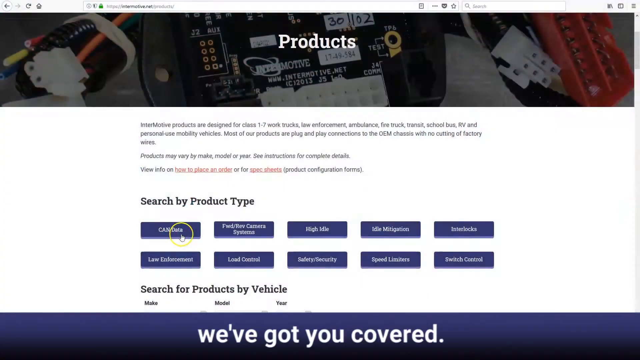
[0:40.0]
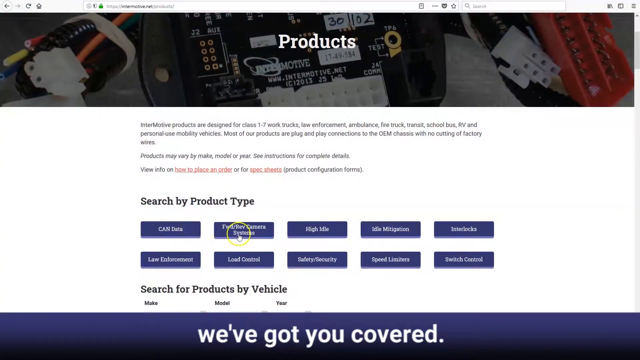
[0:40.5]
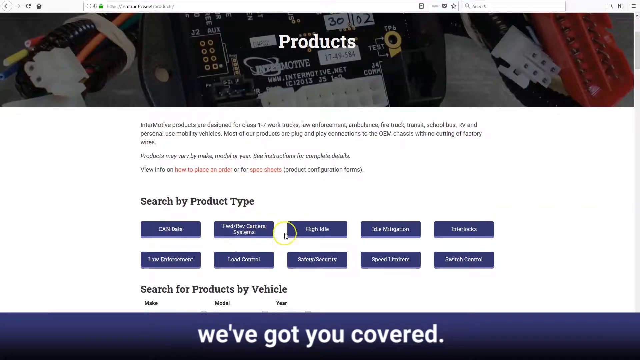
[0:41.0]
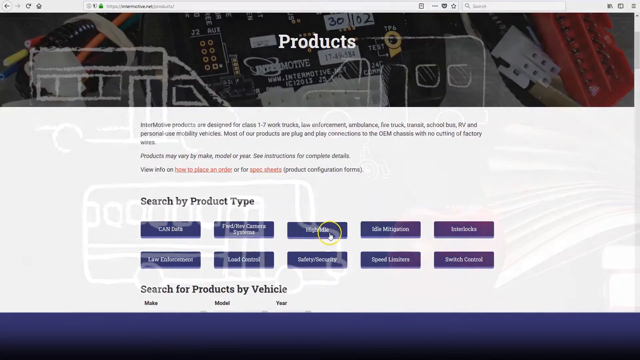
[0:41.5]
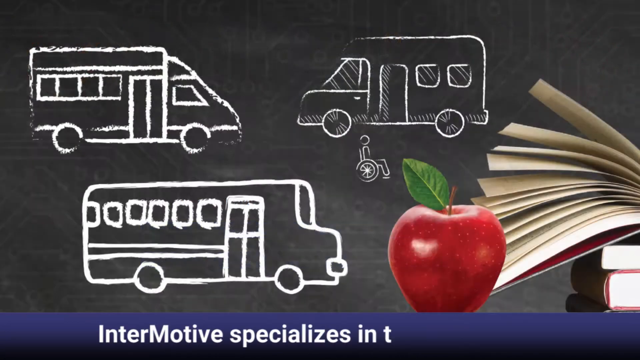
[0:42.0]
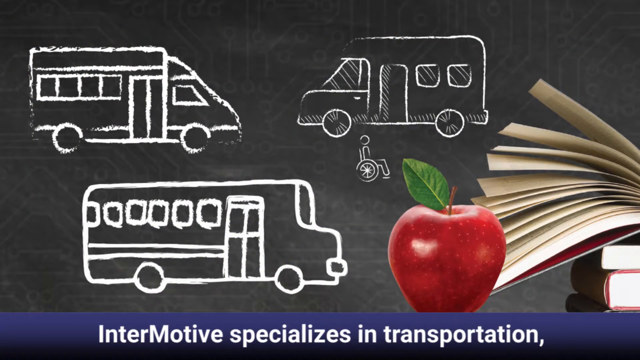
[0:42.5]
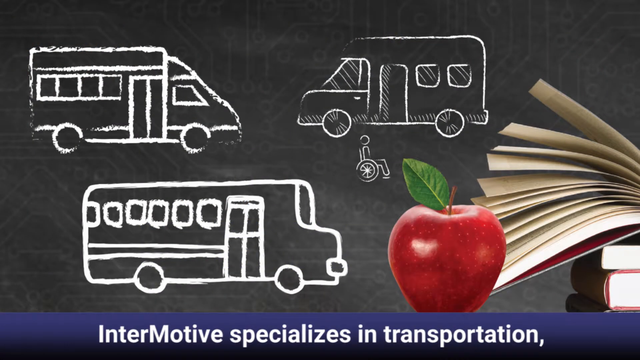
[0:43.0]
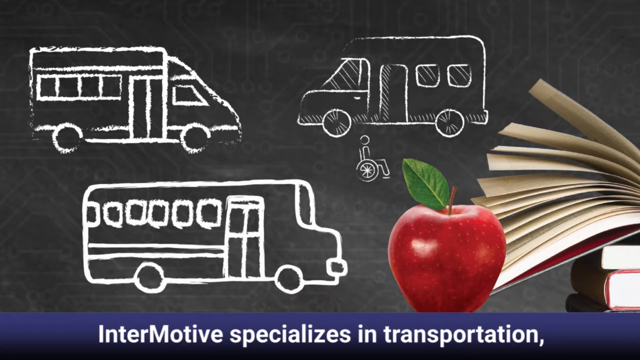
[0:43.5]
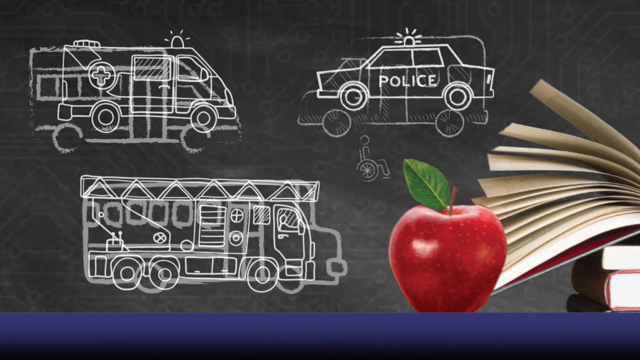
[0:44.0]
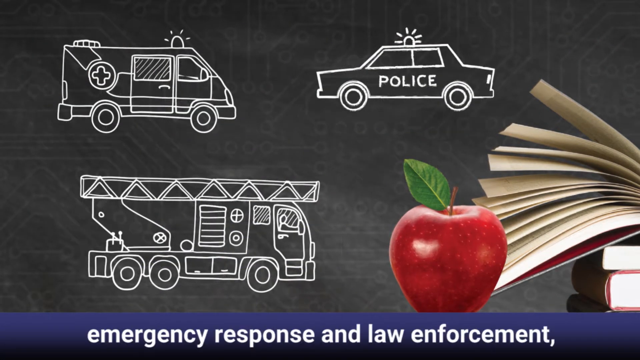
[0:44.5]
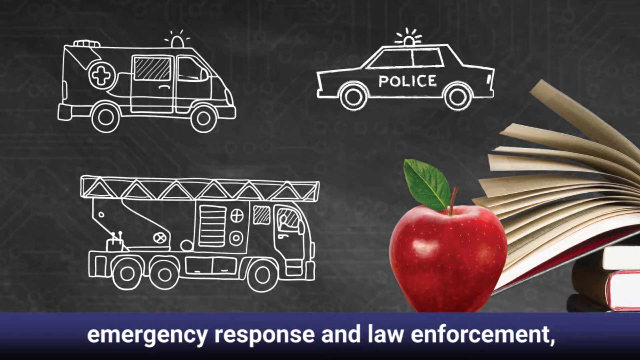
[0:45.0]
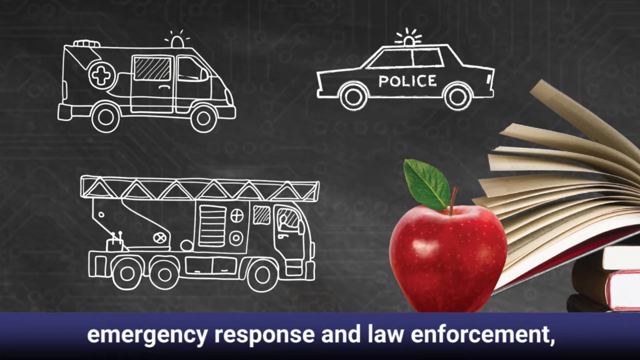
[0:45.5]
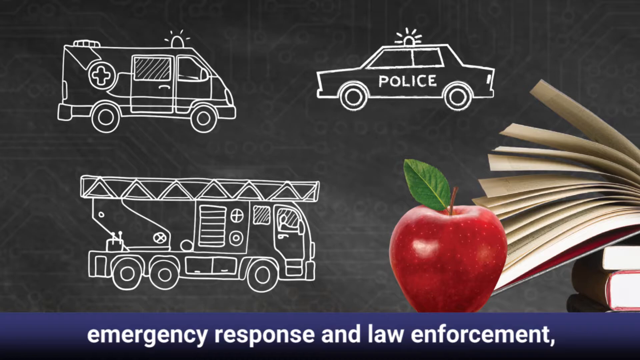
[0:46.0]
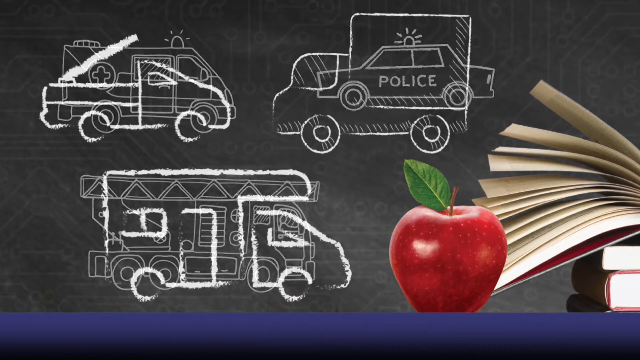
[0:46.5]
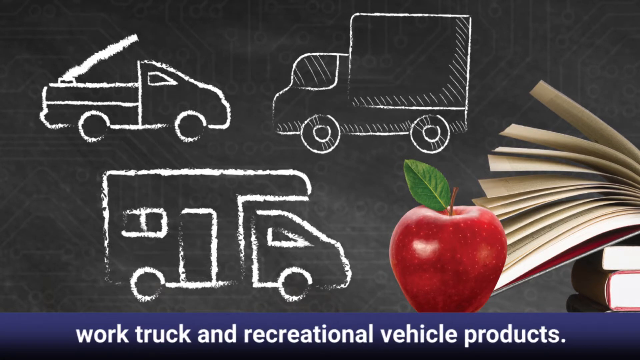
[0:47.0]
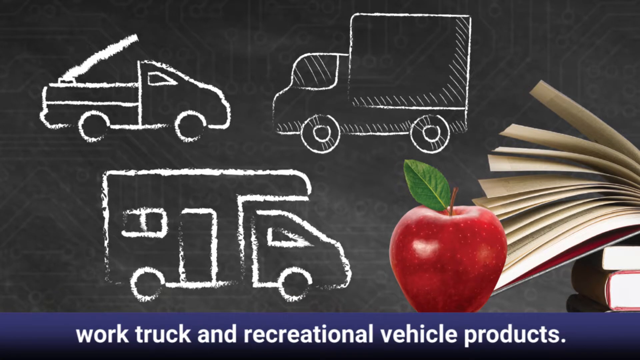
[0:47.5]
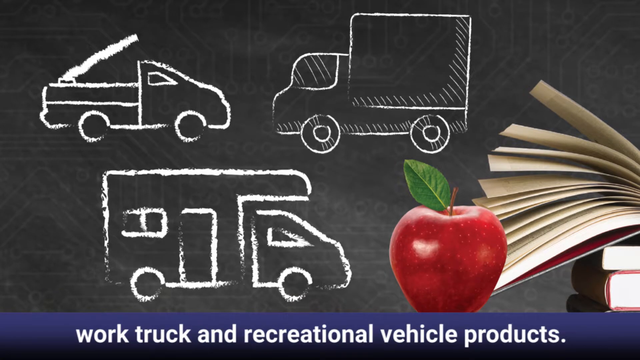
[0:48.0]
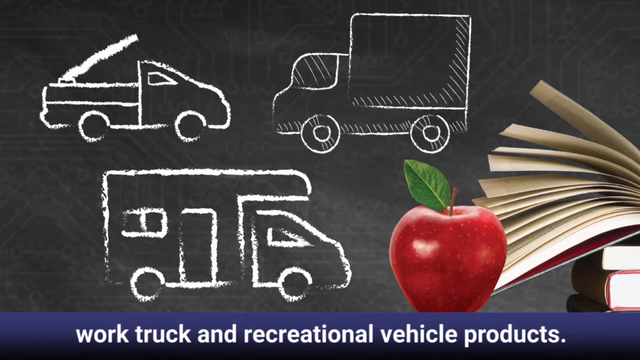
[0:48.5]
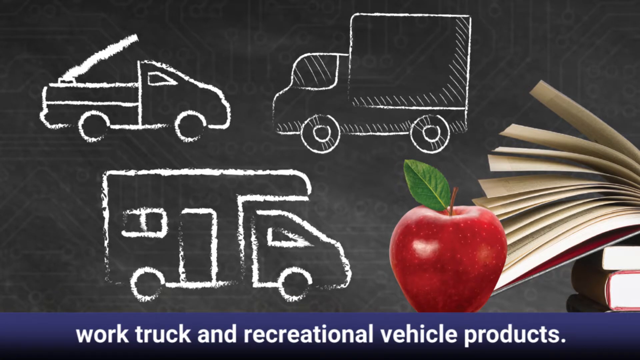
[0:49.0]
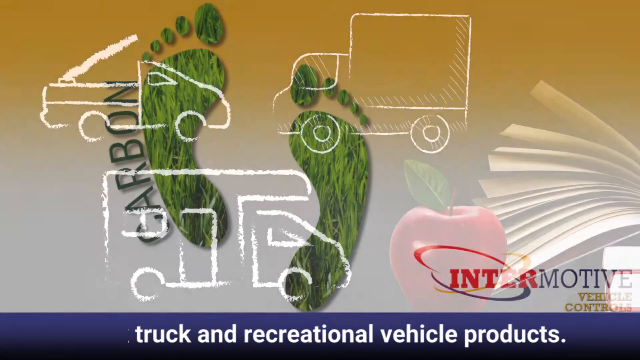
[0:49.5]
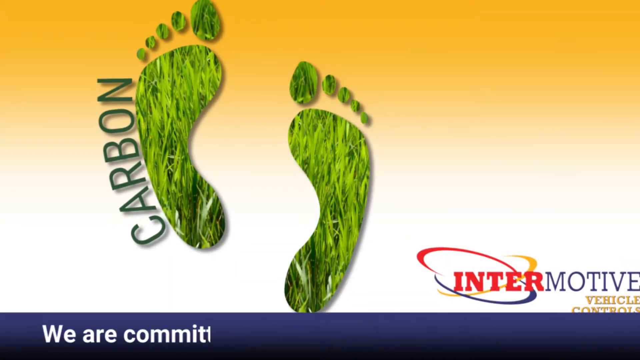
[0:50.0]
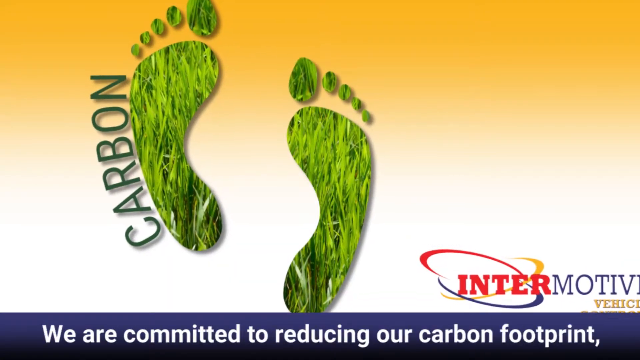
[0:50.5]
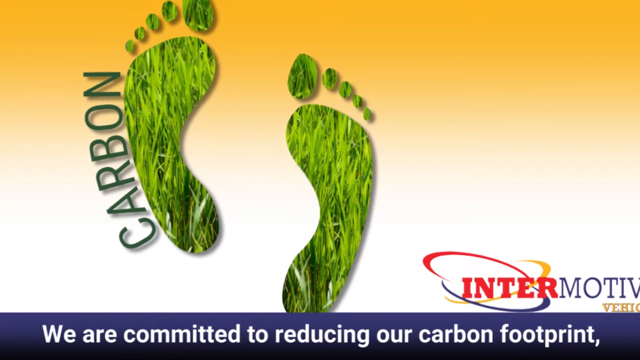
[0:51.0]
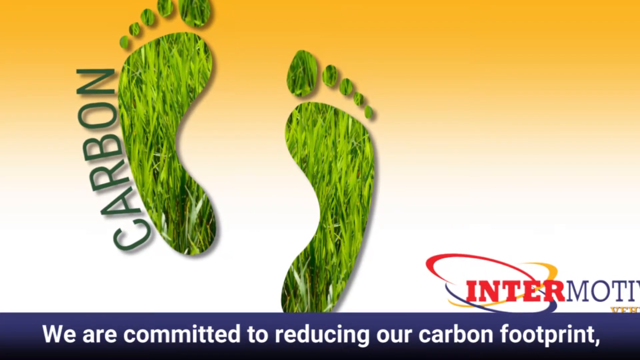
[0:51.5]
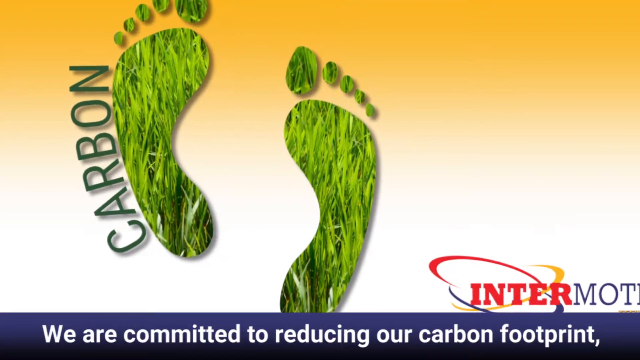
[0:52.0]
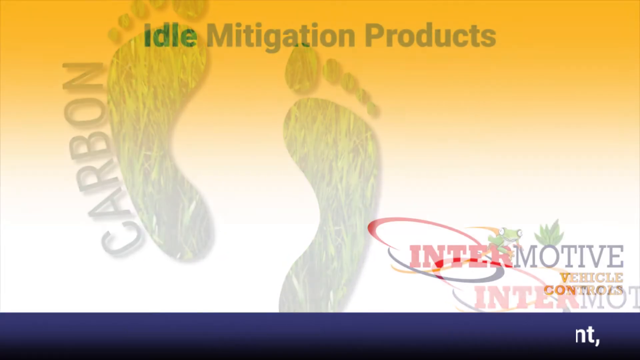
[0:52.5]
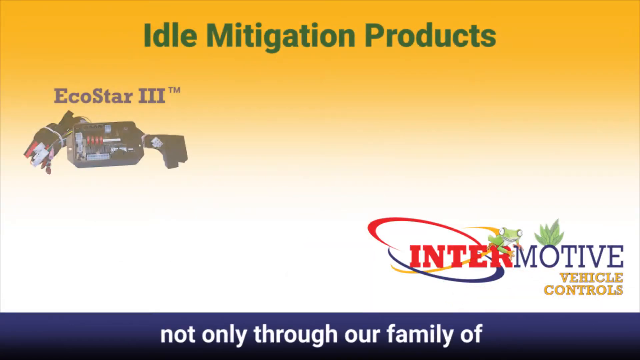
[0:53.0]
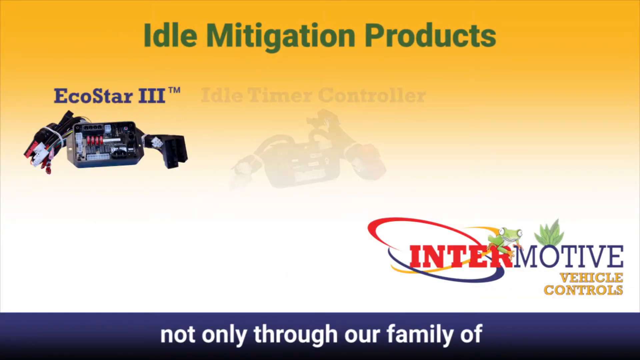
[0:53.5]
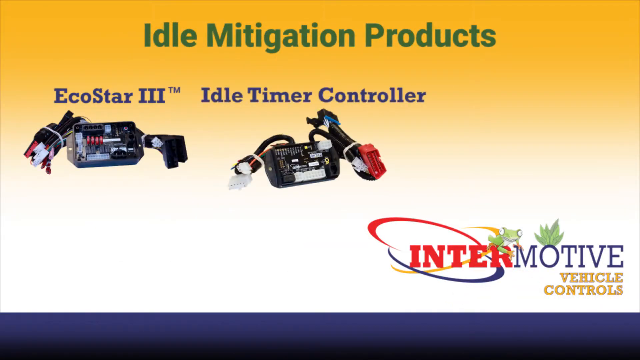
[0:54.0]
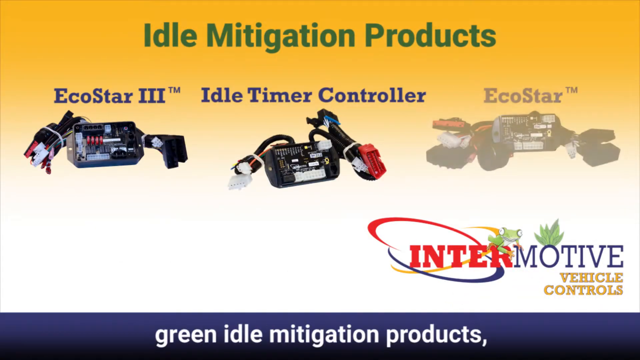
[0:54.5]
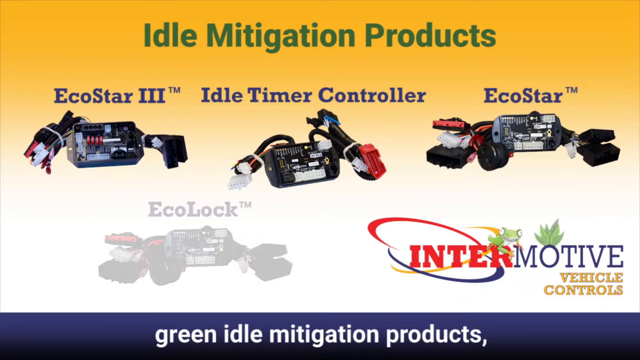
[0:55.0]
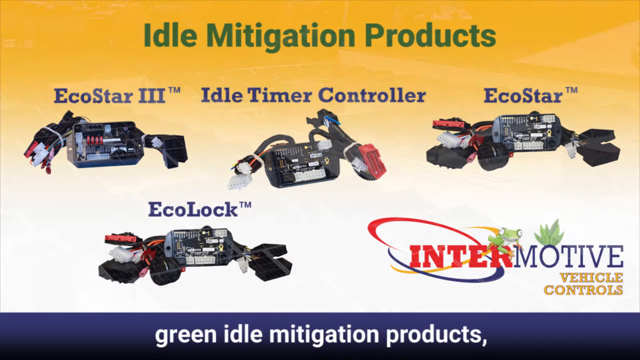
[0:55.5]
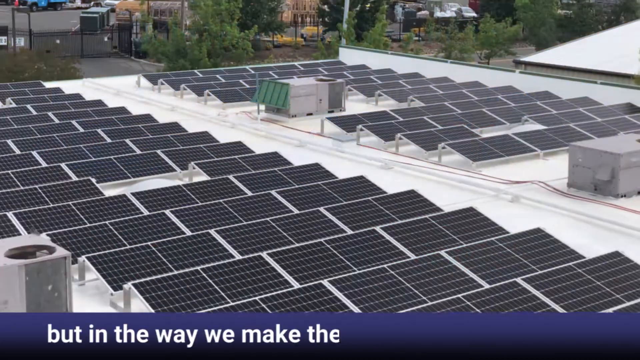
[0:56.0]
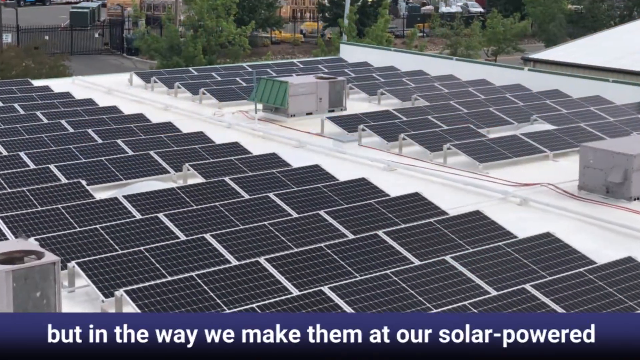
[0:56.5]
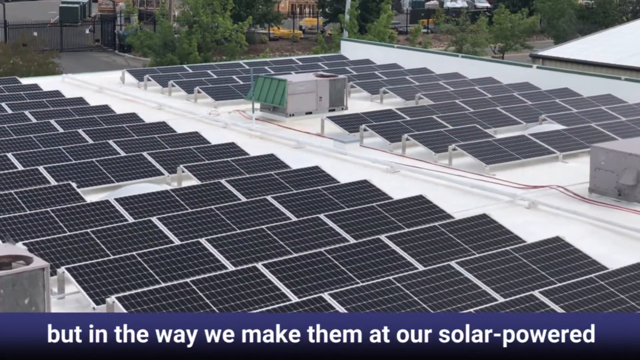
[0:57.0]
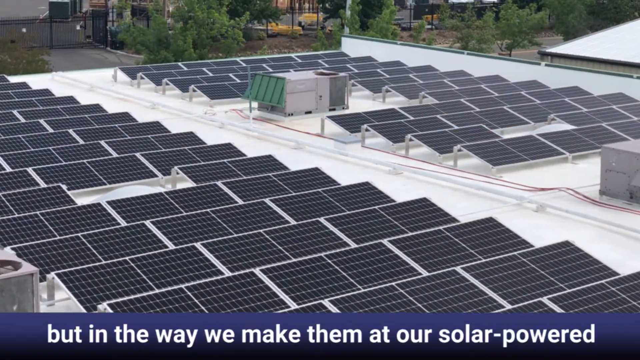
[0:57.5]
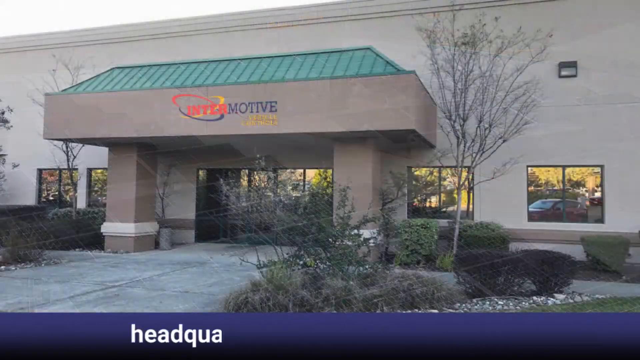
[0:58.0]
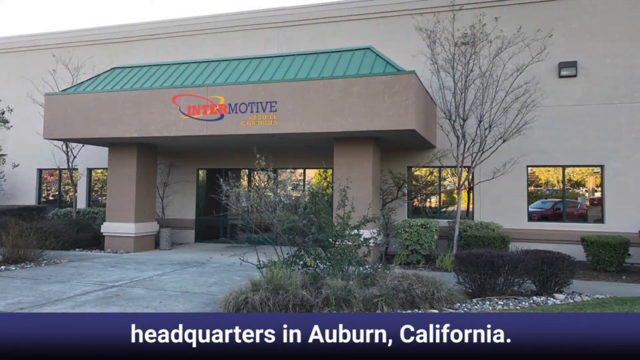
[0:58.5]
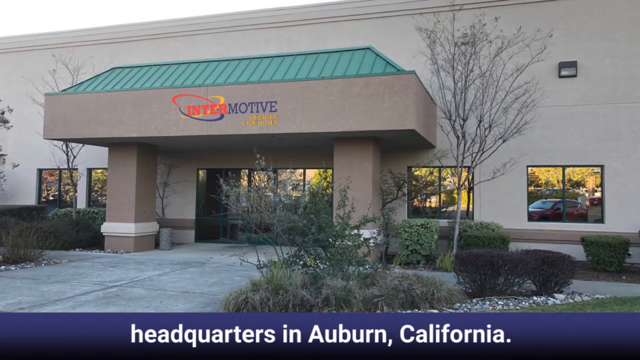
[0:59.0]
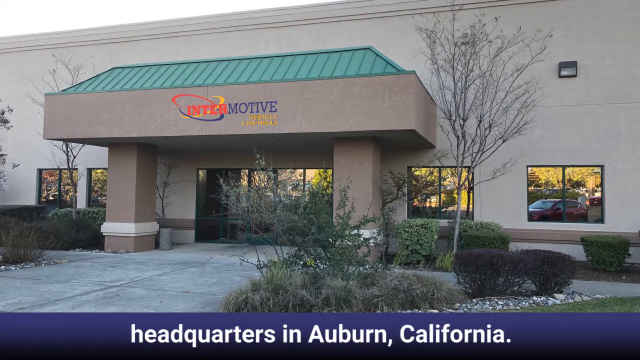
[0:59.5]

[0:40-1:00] A website is shown, with a picture across the top quarter and the word "products" in white in the center. It shows electrical-looking components that can be plugged in, wires, and tables, with a paragraph of very small print below, then "search by product" and two rows of five blue buttons with white text. The cursor scrolls over, and the video goes to the chalkboard with books in the bottom right. A small bus is in the top left, a big bus is below it, and up to the right of that bus is a smaller bus with a wheelchair below it, while white text still scrolls across the bottom. An ambulance is at the top, with a fire truck below it and an electrical truck like the earlier one; up to the right is a police car with "police" on its side. All of these are drawn on the chalkboard. There is also a truck with a big long pole sticking off the back and angling up, plus a small box truck and a smaller bus drawn on it. Next, on a yellow background, two footprints on the left side have grass visible through them, and down on the left side of the left footprint is the word "carbon," as the view slowly zooms in. At the top is the text "idle mitigation products," and from left to right are "echo star 3," "idle timer control," and "echo star," with "echo lock" below. An overhead view shows a building with solar panels all over it as the view slowly zooms in. Then the view is in front of the office for Intermotive, which is about two stories high, with windows across the bottom, no windows on the top, and trees and bushes outside.